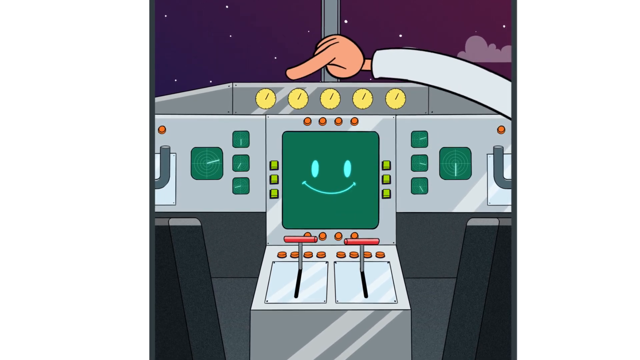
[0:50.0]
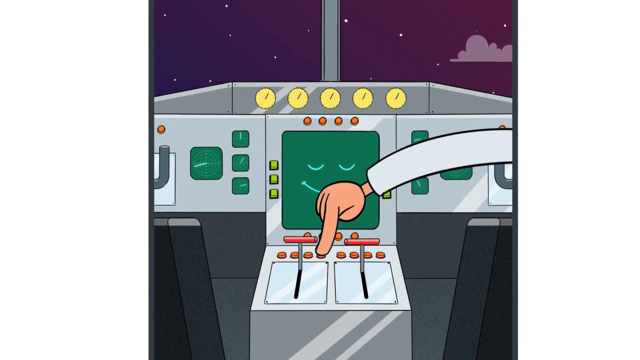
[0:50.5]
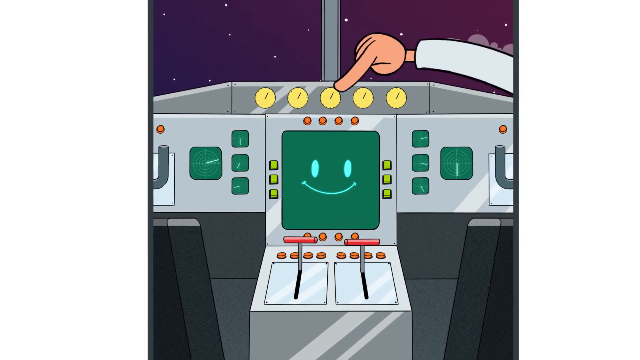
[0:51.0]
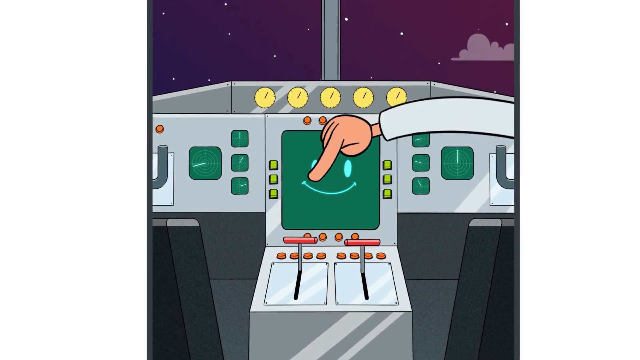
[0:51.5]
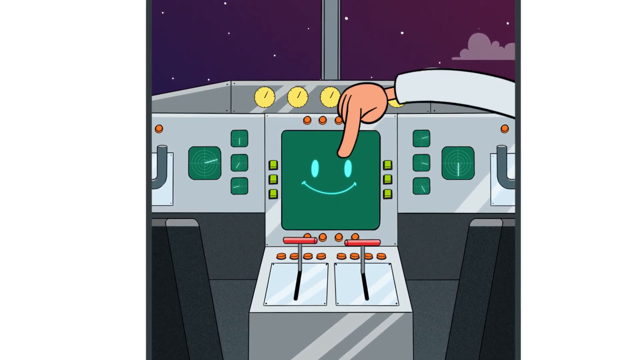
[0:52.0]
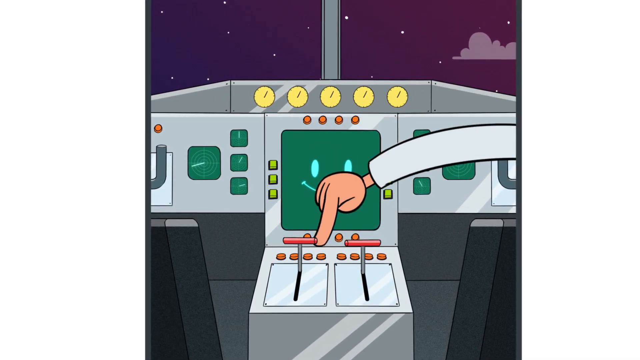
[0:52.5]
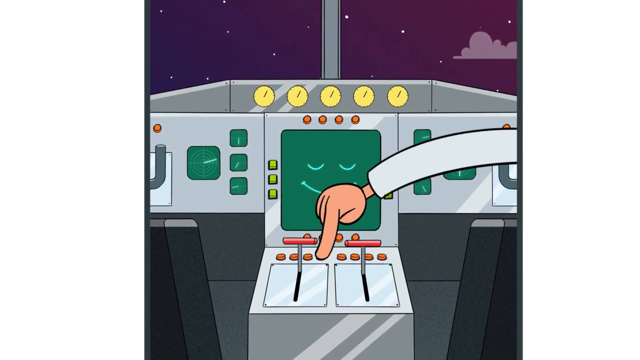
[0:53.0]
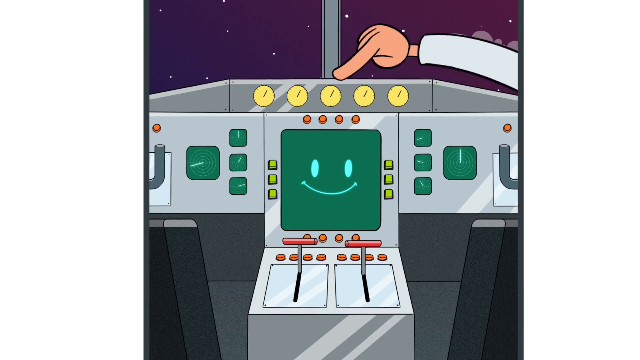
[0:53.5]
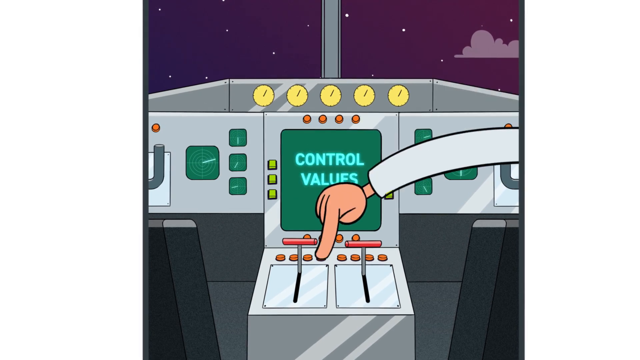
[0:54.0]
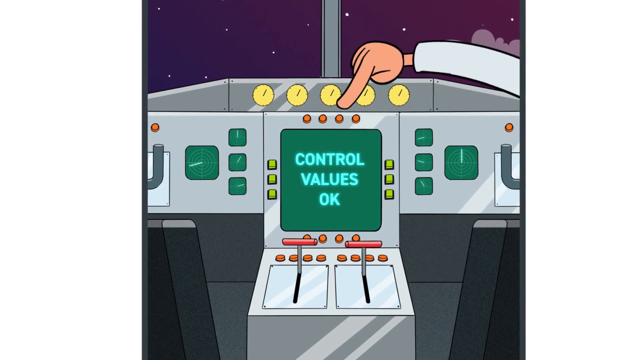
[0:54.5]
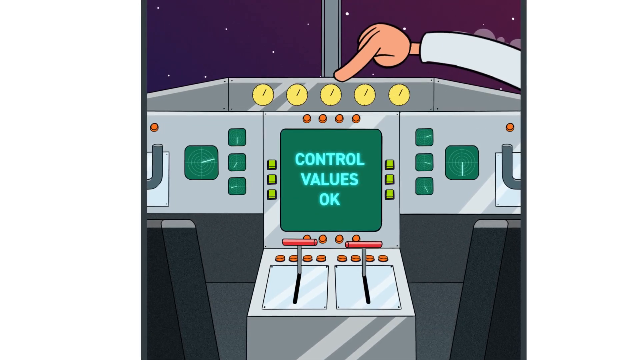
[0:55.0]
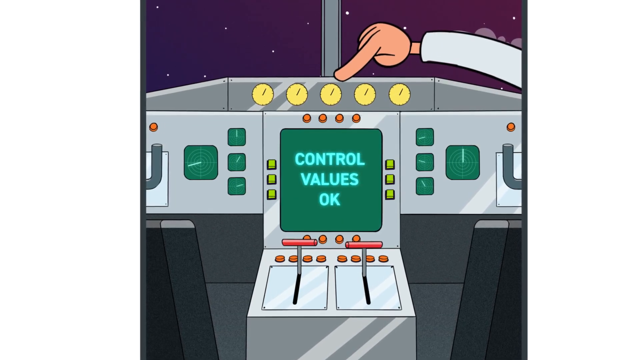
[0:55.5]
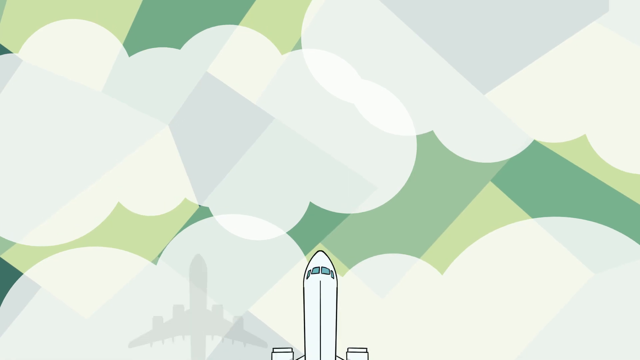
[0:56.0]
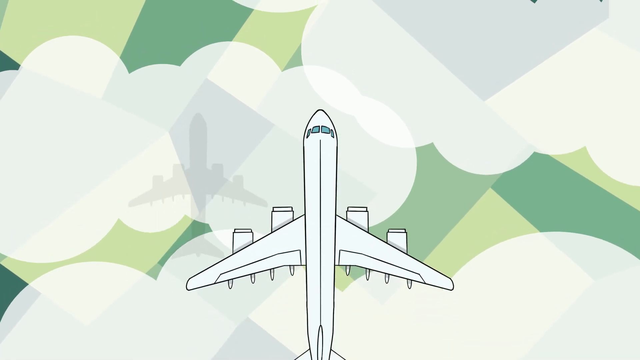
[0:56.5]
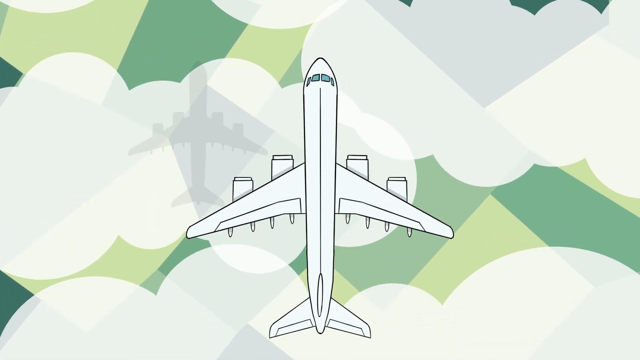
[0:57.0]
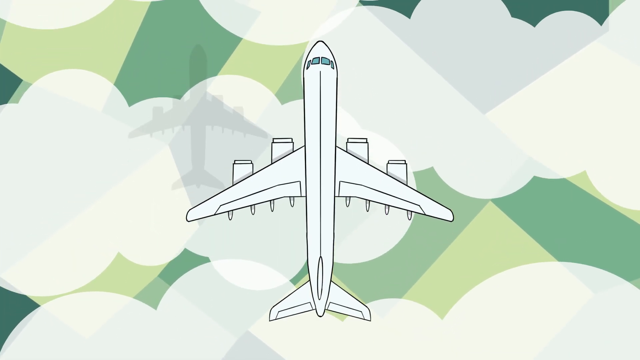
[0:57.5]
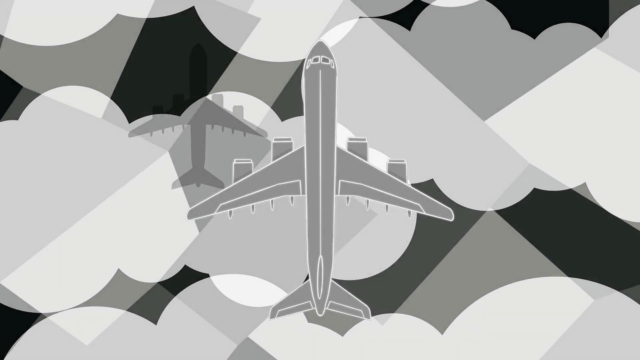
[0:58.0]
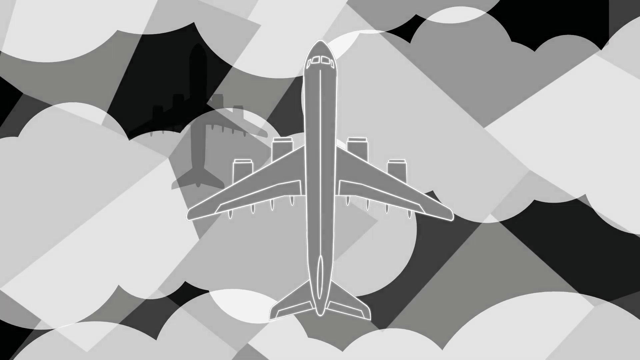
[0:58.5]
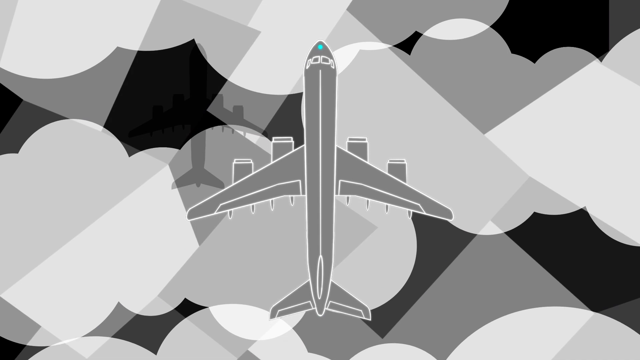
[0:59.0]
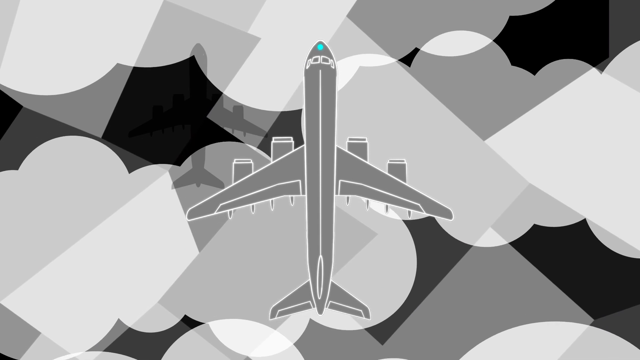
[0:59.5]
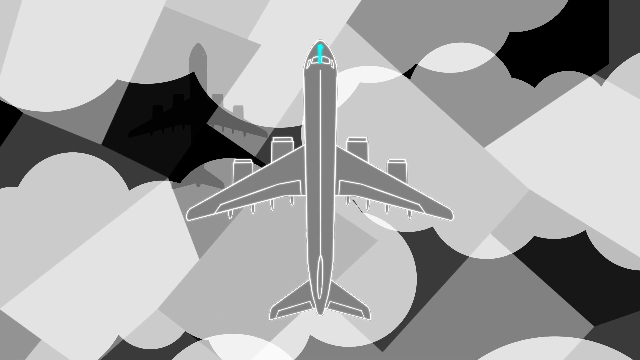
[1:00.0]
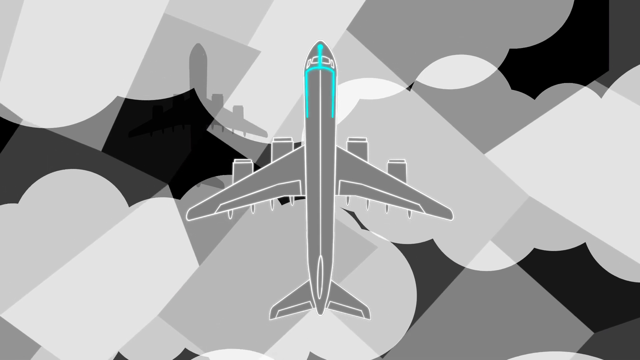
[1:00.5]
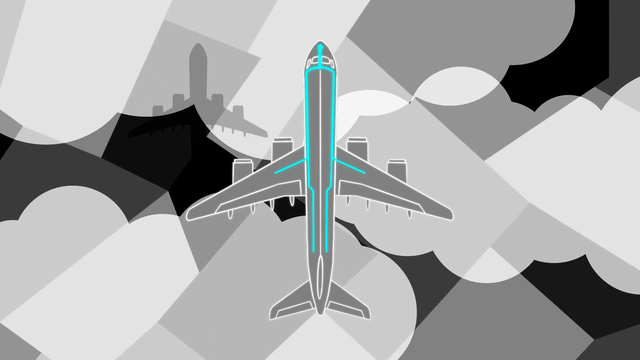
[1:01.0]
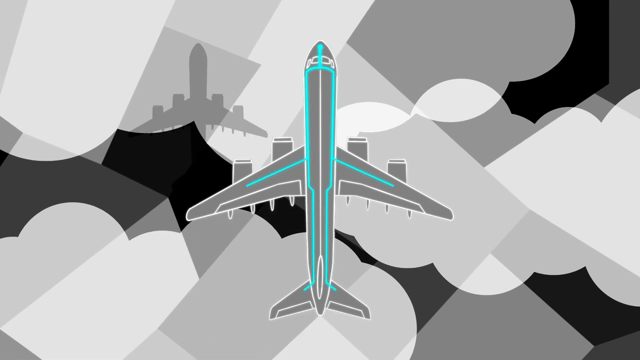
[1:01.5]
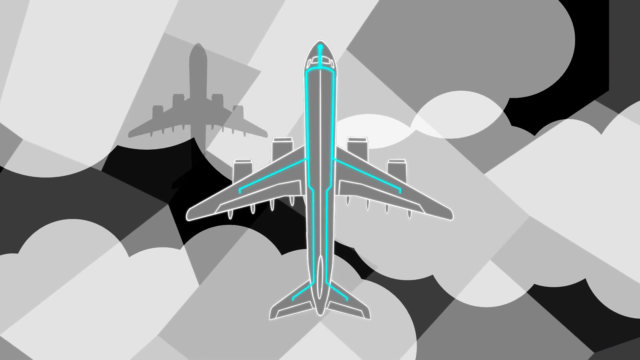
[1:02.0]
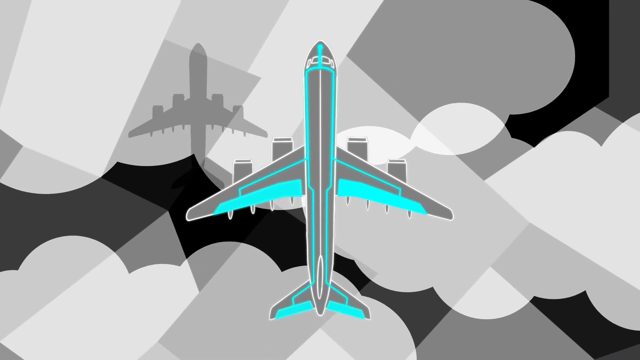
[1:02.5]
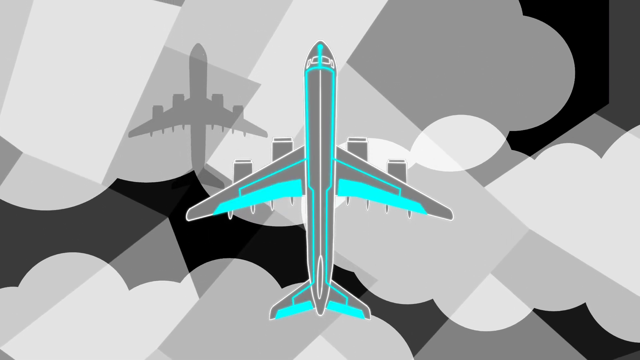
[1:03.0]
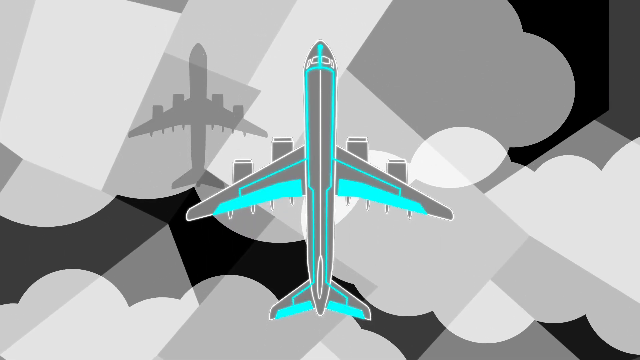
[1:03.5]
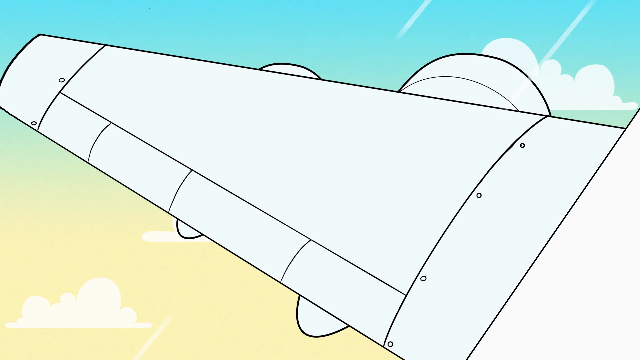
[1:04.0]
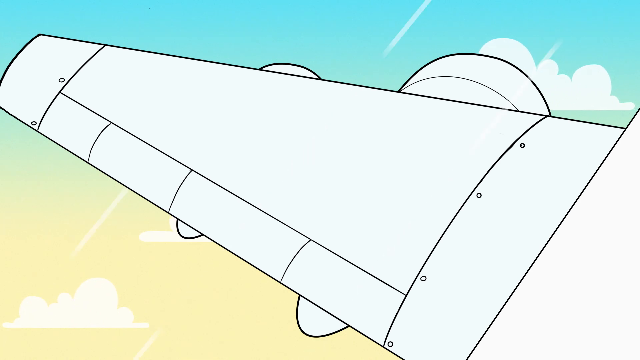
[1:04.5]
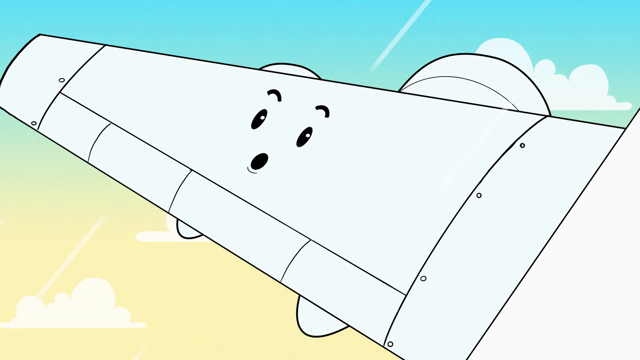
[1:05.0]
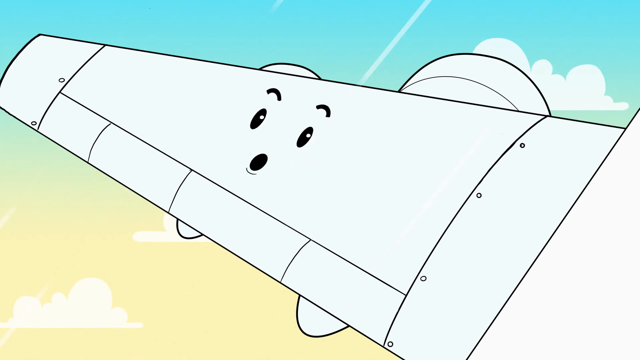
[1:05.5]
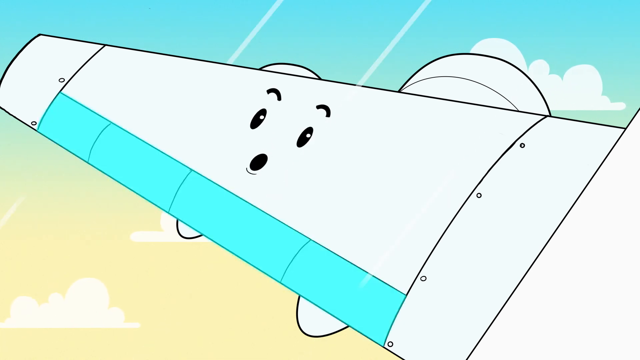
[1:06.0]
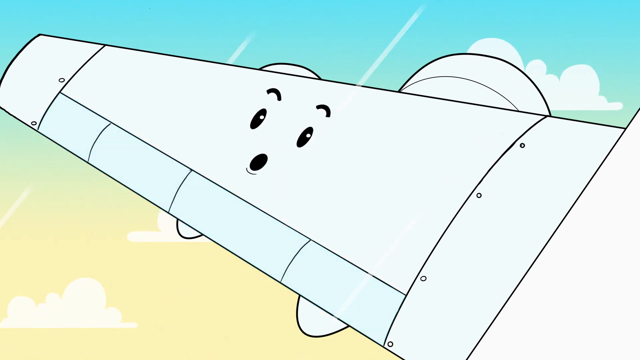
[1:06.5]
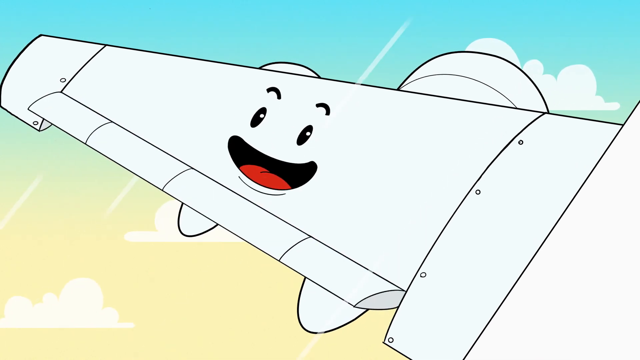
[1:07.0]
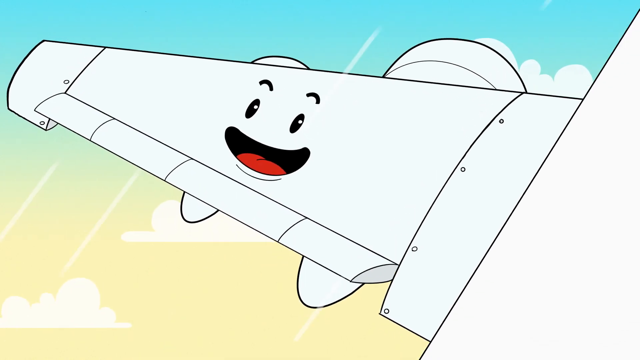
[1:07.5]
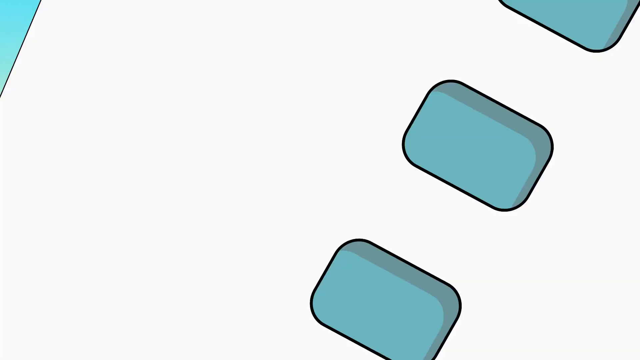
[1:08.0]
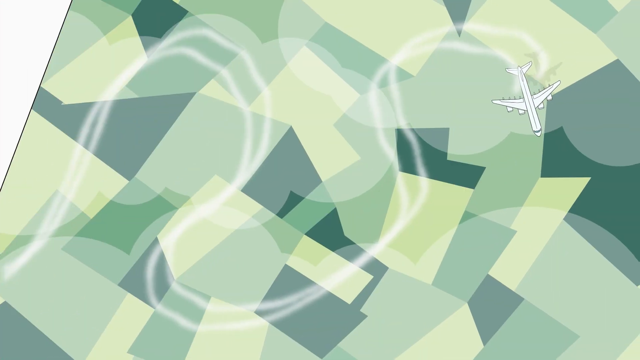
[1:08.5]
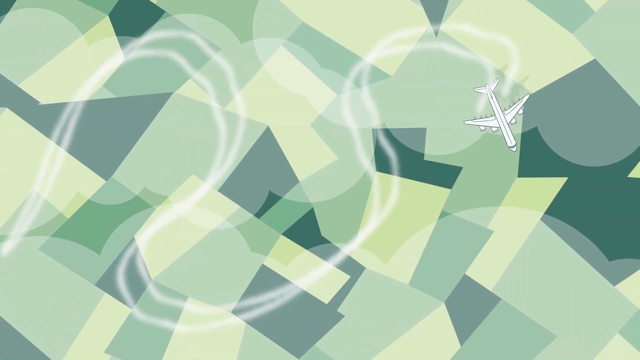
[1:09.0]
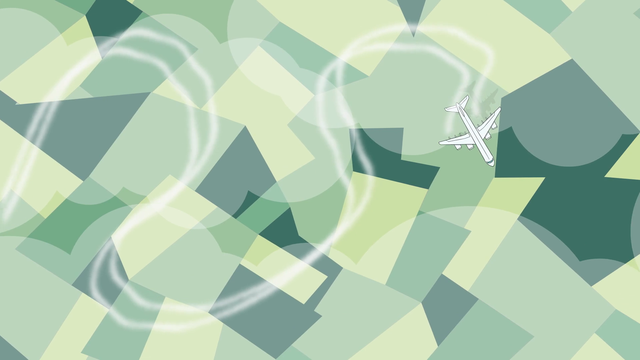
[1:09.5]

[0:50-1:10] An animated drawing of an airplane cockpit shows a large green square with a smiley face in the center of a silver console with red buttons and yellow clocks at the top. From the right side of the screen, a person in a white shirt points downward and touches red buttons at the bottom of the screen. The smiley face disappears and the words "control values okay" appear on the same screen. Next comes a top-down animation of a white plane with green grass below and white clouds. The screen goes gray, and blue lines on top of the plane start at the cockpit and bleed backward to the back of the plane and over the wings. A close-up of the left wing shows two rocket engines underneath, with a sky that is blue at the top and yellow at the bottom, and small white dashes moving underneath the wing. A surprised smiley face appears on top of the wing. The bottom left of the wing turns blue and then the blue goes away; that area is propped up, and the smiley face becomes happy, showing a red tongue in its mouth. An aerial shot of the top of the plane then shows it making smoke curves, one almost looking like a U with long curved ends.